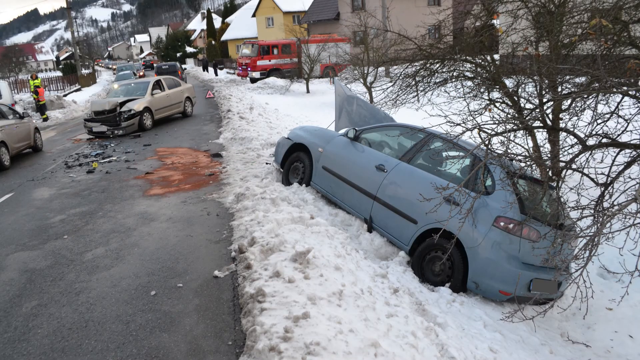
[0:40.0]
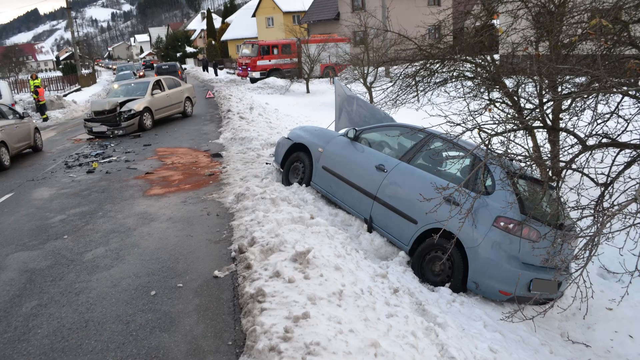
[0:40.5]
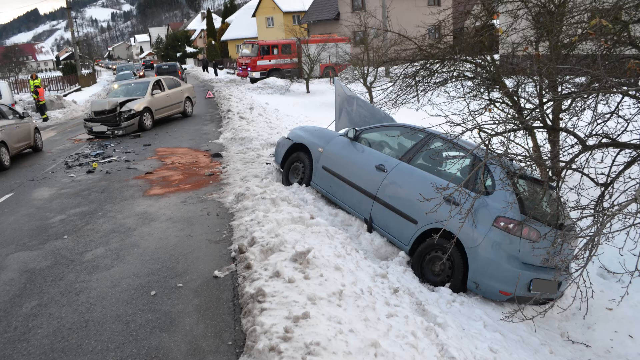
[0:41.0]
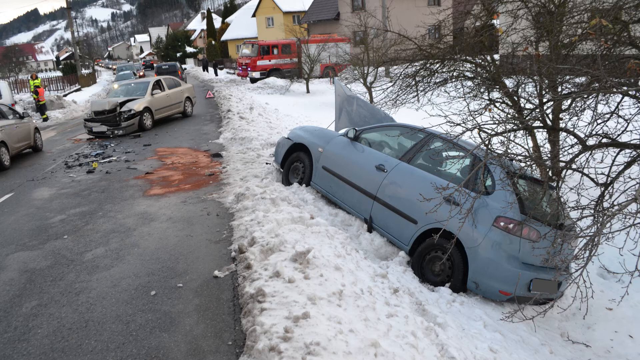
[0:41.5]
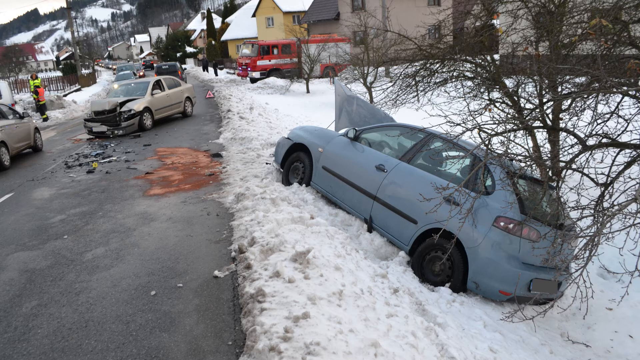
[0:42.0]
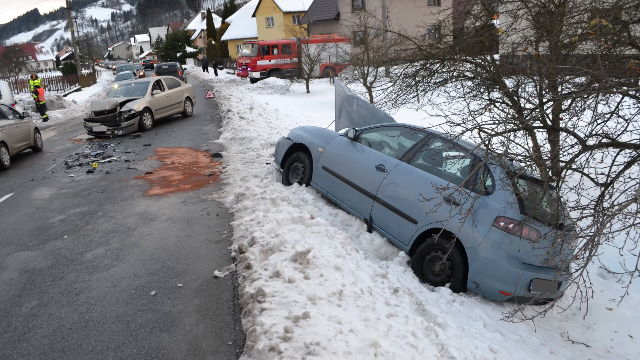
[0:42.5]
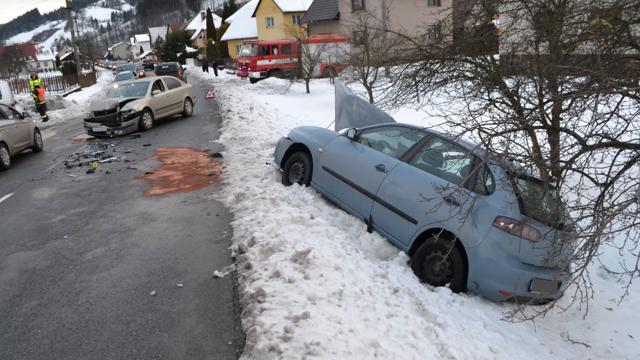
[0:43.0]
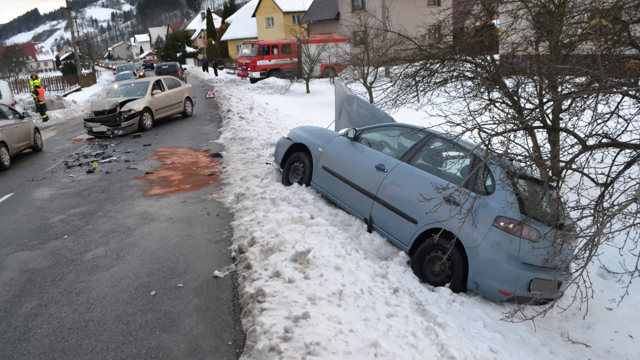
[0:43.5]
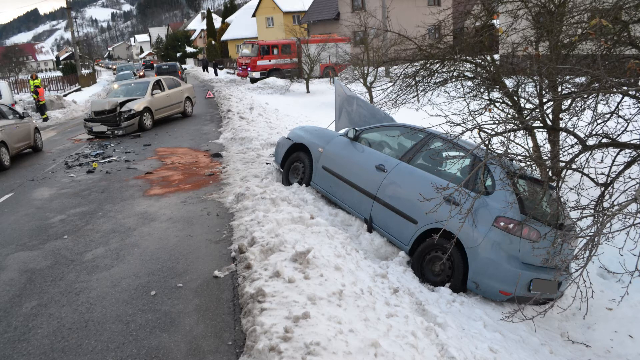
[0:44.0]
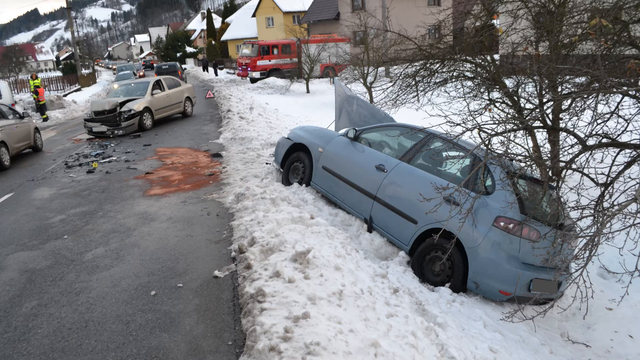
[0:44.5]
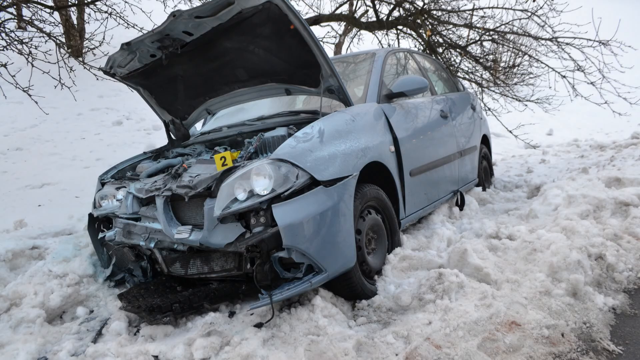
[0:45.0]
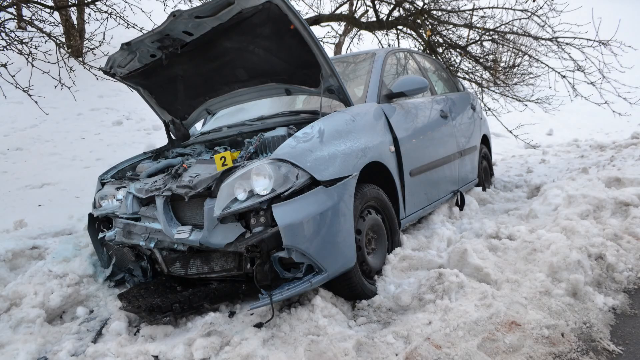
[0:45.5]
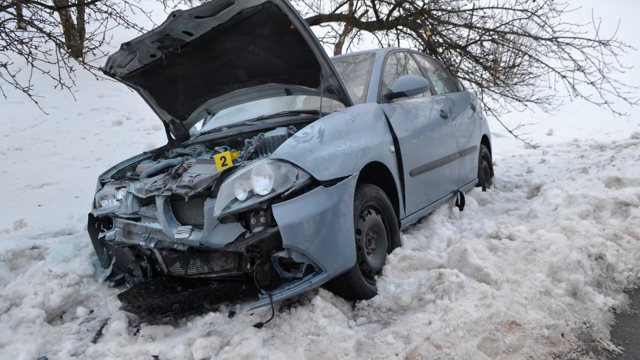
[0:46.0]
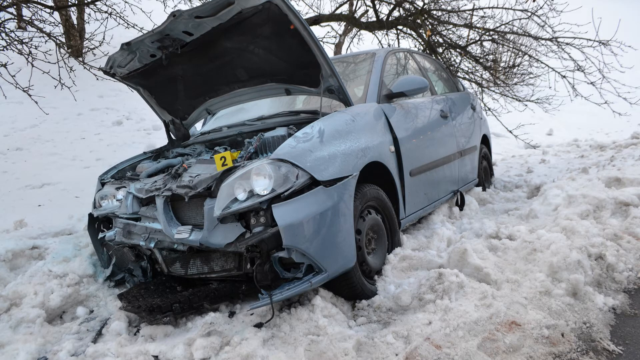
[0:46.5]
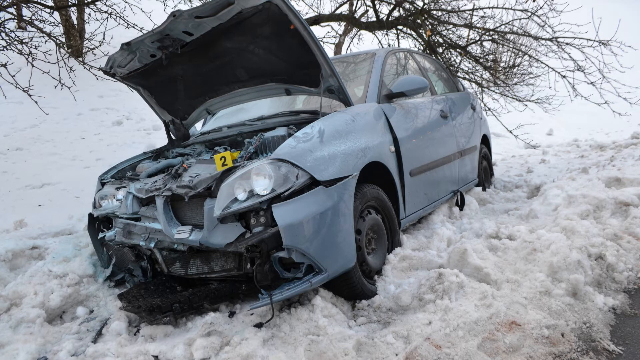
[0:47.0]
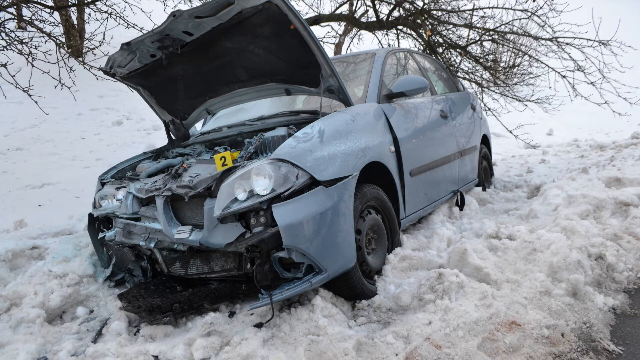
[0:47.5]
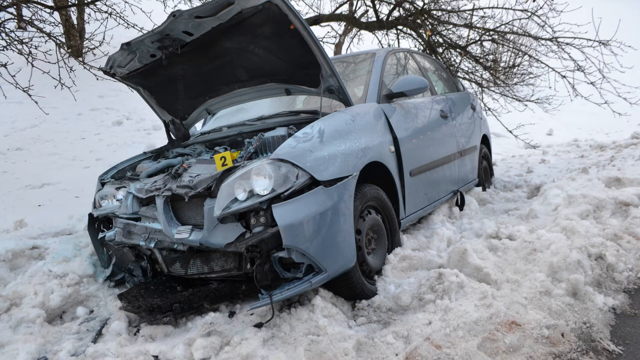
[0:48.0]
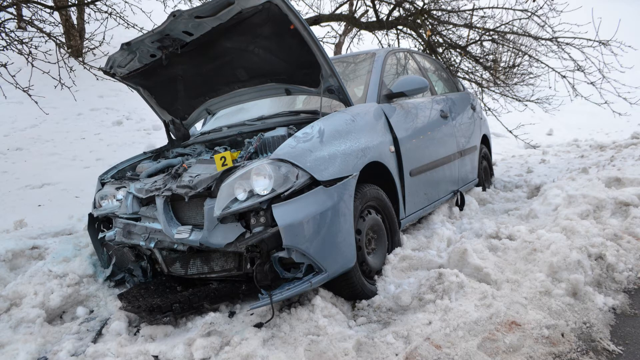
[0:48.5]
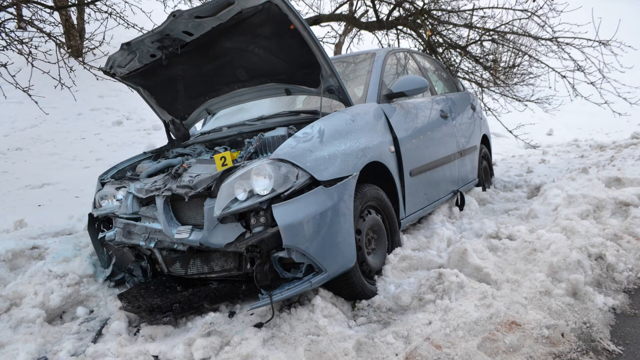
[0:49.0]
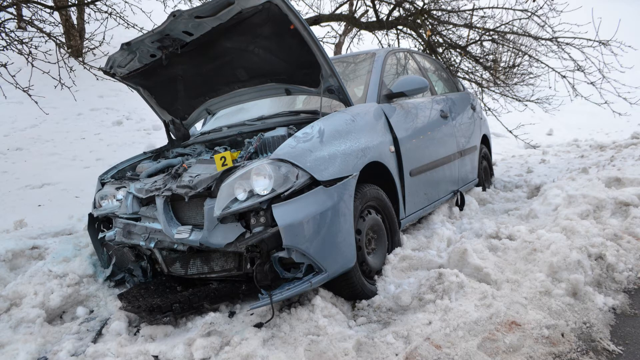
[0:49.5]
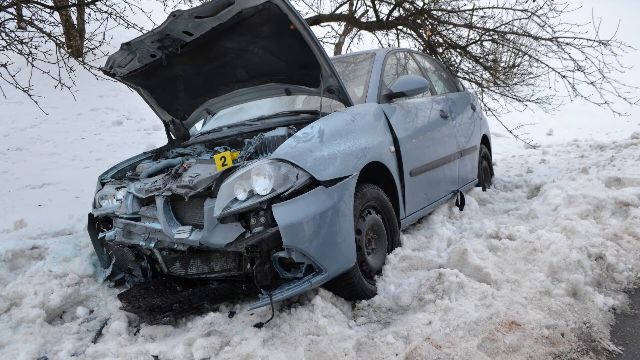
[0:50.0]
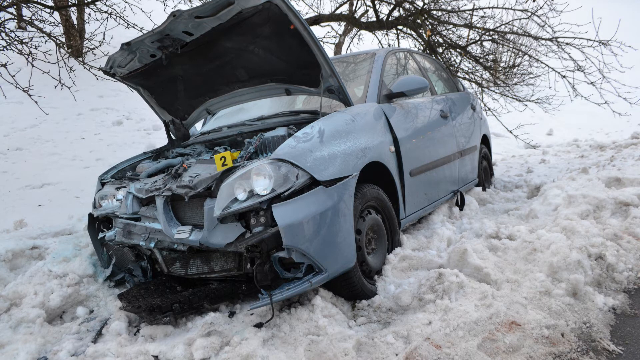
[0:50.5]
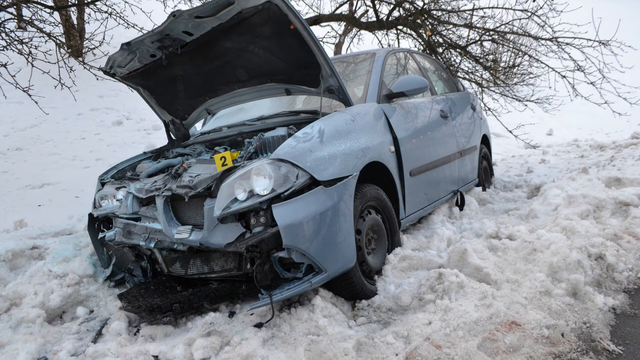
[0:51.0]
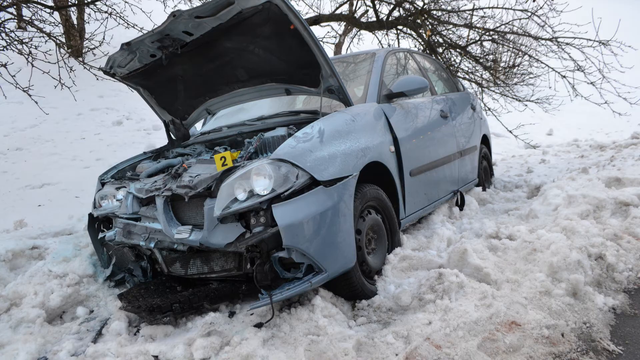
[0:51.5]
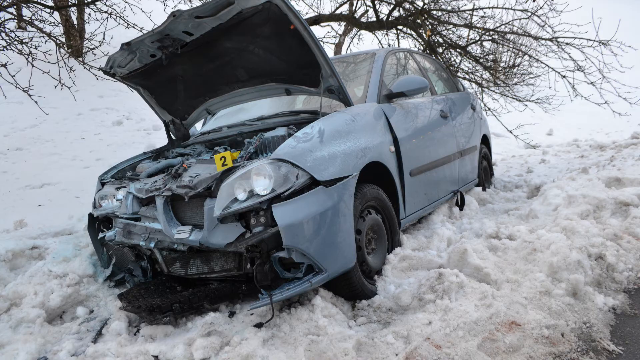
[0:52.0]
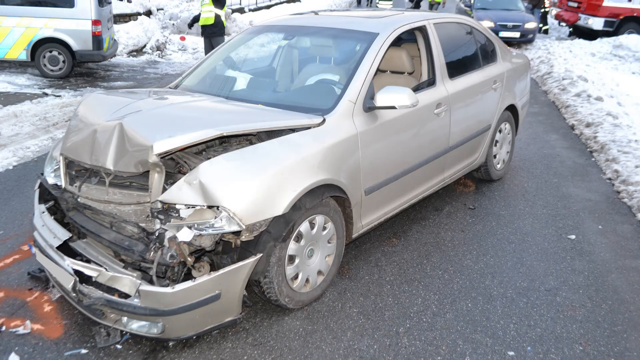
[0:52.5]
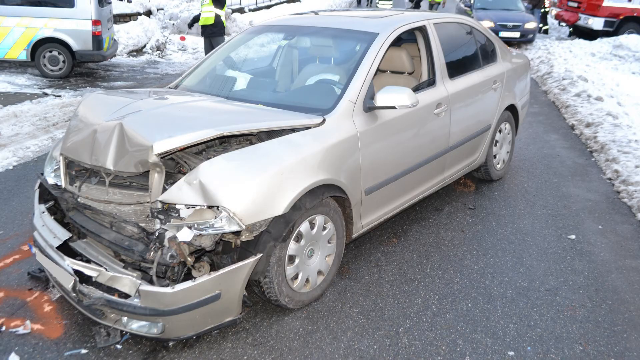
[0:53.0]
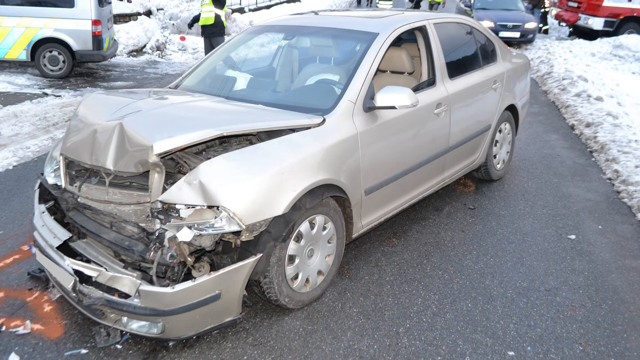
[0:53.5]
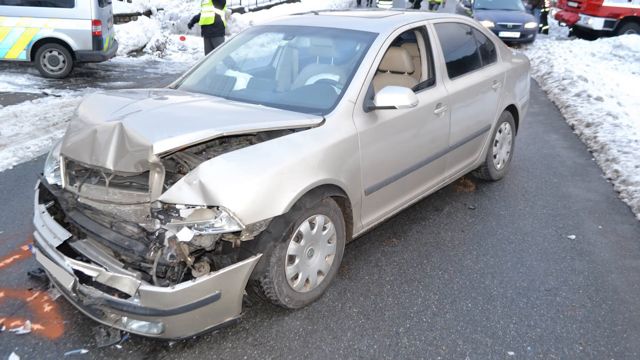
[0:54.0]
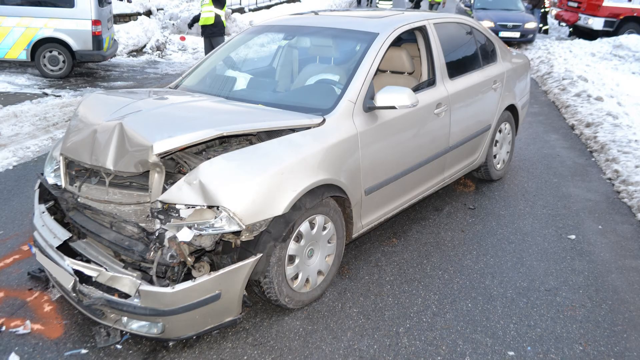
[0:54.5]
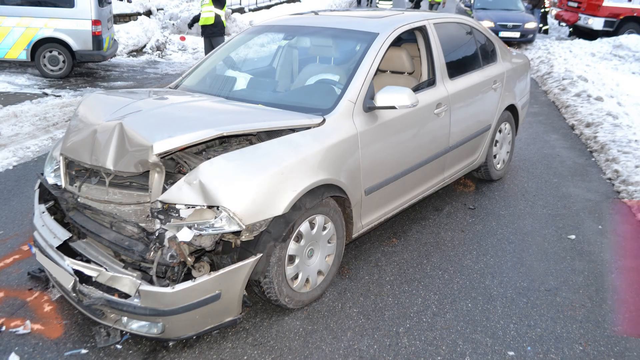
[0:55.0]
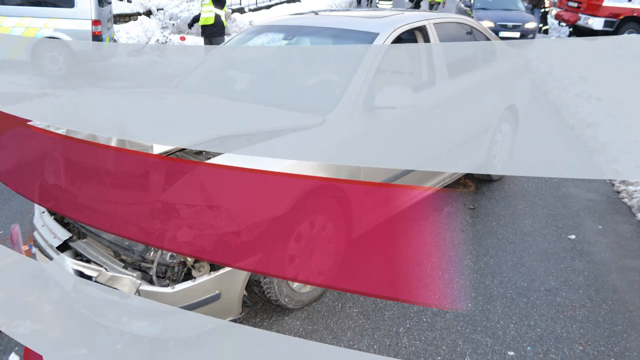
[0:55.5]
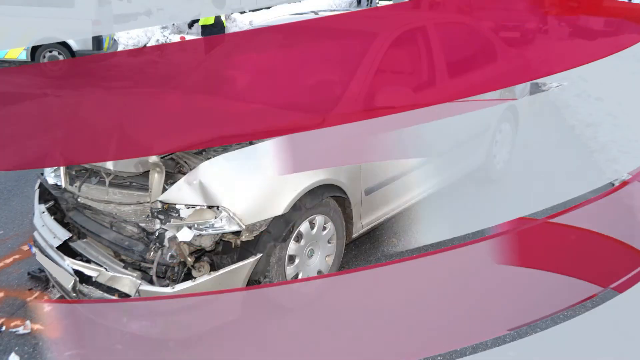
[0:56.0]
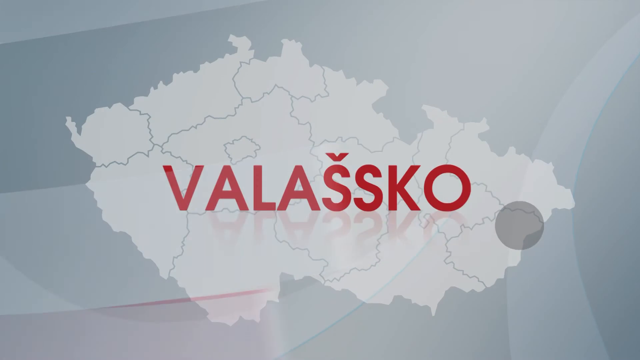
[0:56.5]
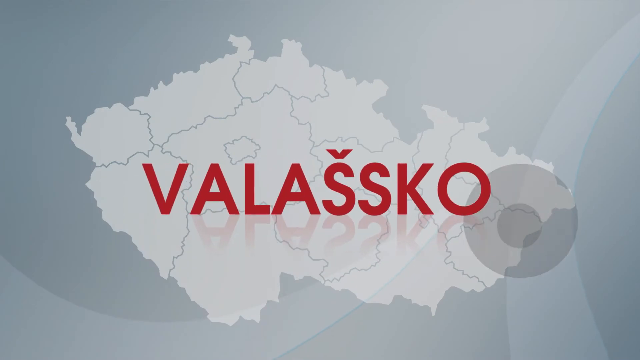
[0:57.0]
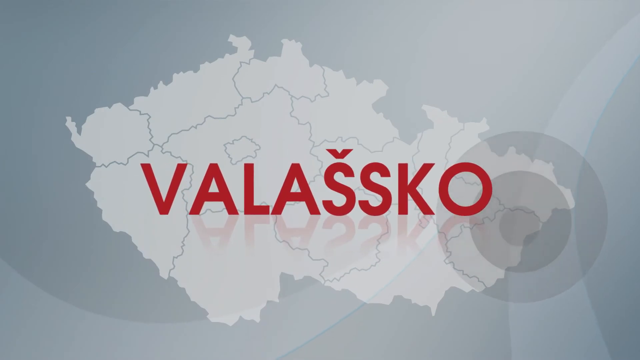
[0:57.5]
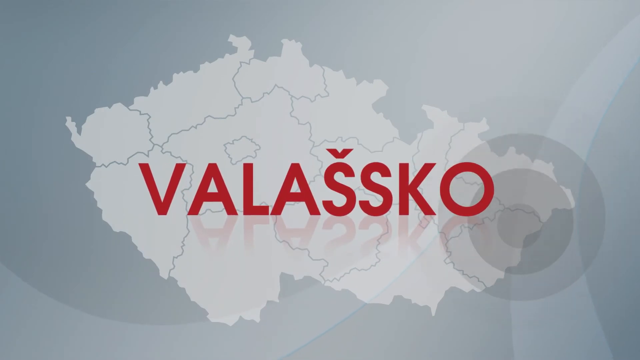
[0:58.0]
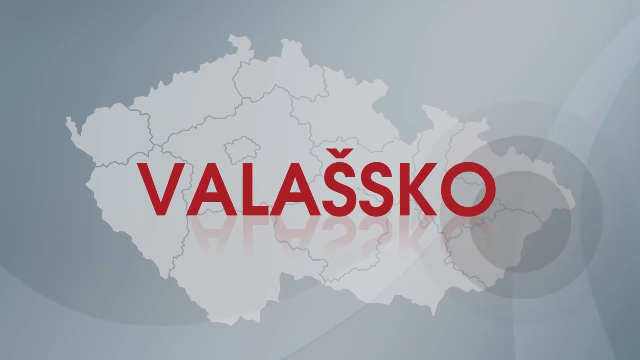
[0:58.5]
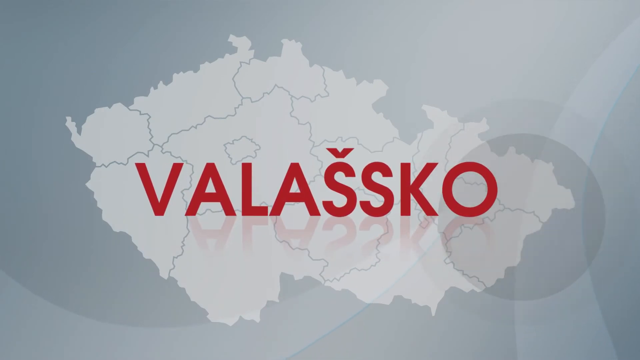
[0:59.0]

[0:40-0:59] In a wintry setting, with the website "www.vlastikinzc.cz", a car has gone off the road, its hood up, a little way down an embankment, with ski runs visible in the distance. Another car is badly destroyed in the front, and there is a lot of debris on the road. The front of the blue car is shown; the two cars clearly hit each other head-on. Inside the engine where the hood is up there is a number two, and something yellow. The other car is shown next. The lines go by and the word "Velasco" appears, along with what looks like a country, somewhat reminiscent of Hungary.